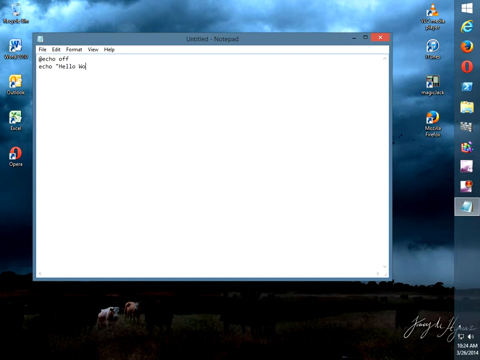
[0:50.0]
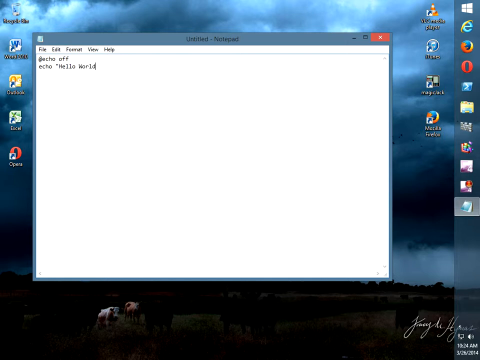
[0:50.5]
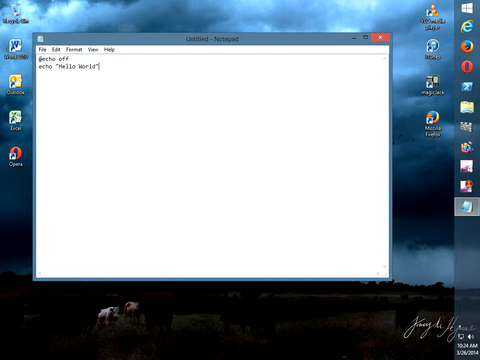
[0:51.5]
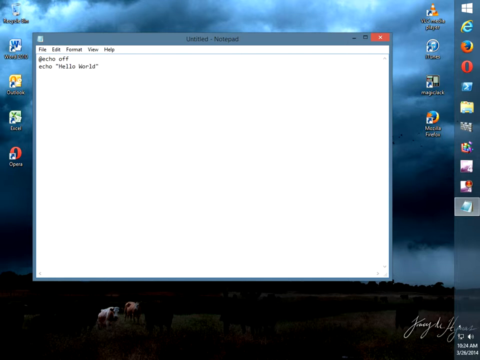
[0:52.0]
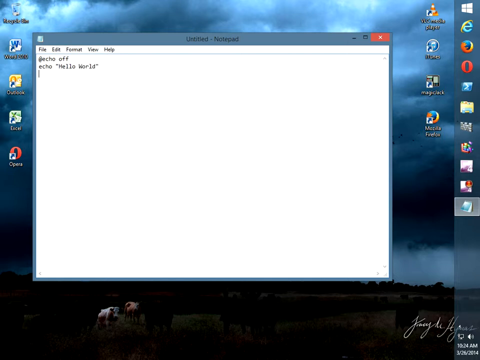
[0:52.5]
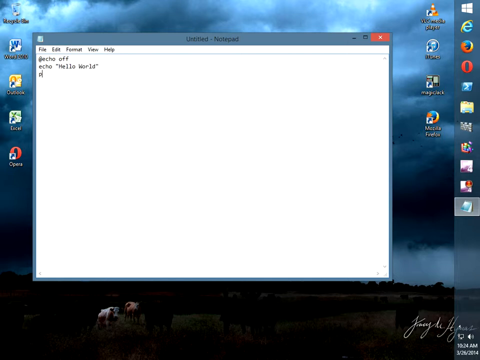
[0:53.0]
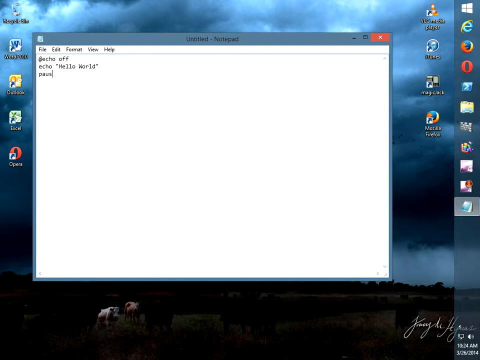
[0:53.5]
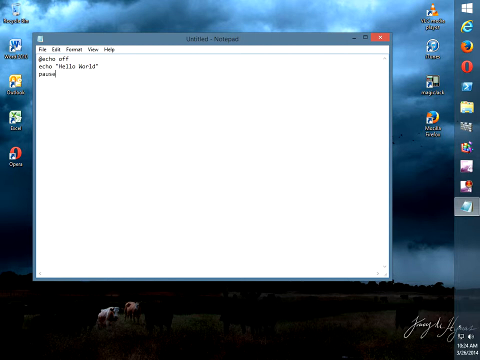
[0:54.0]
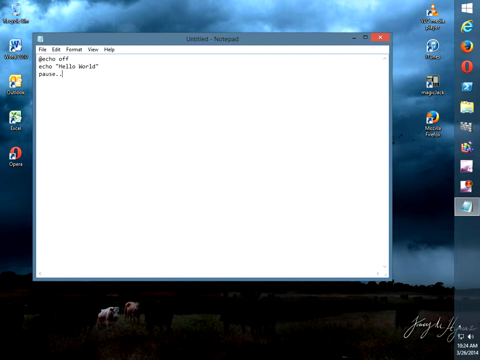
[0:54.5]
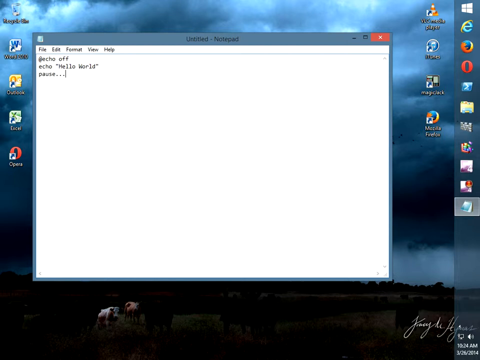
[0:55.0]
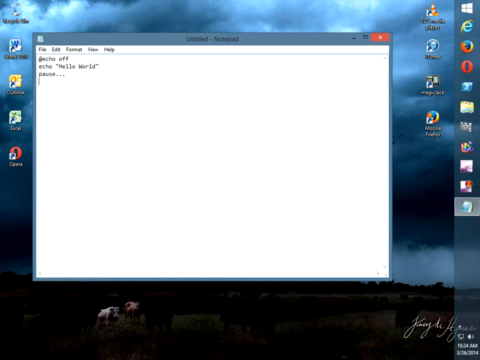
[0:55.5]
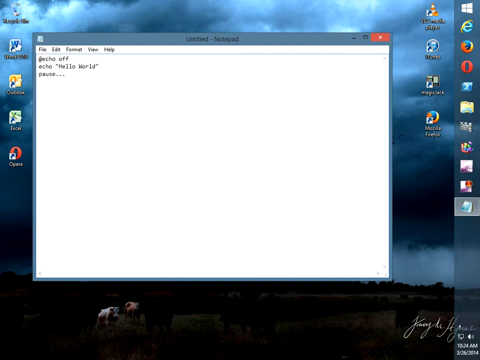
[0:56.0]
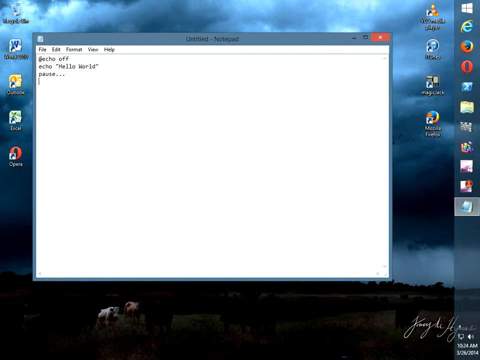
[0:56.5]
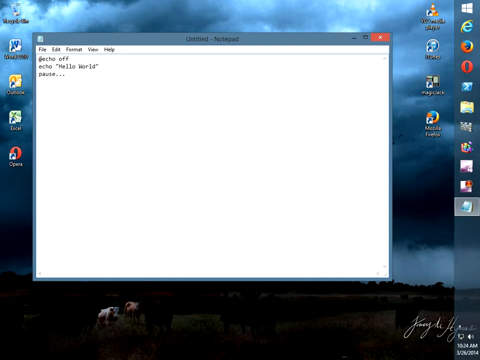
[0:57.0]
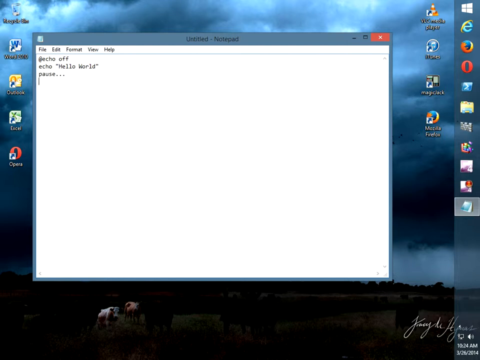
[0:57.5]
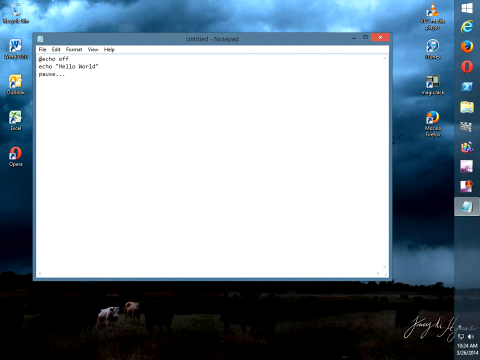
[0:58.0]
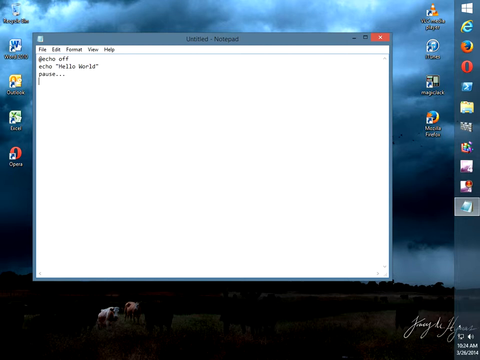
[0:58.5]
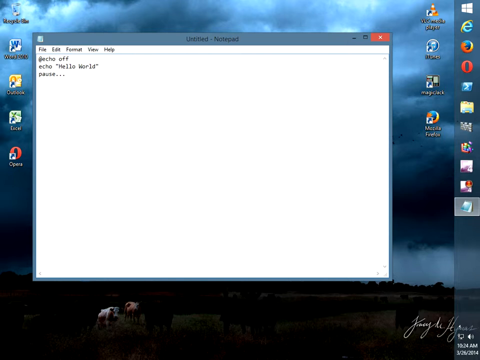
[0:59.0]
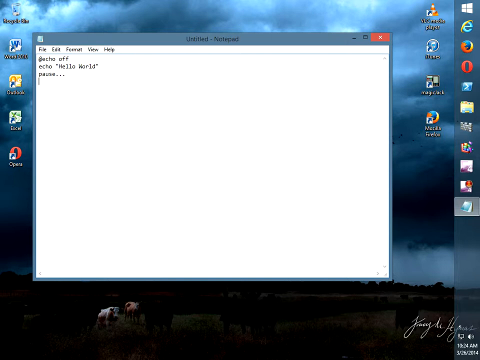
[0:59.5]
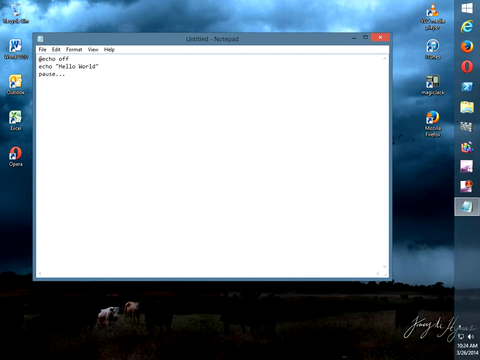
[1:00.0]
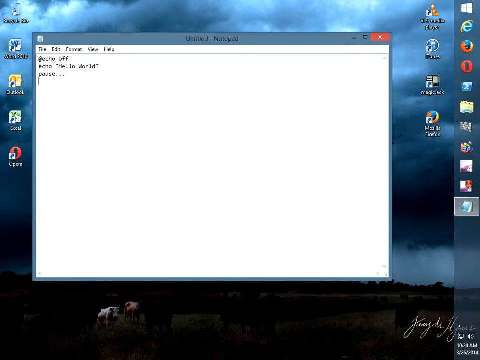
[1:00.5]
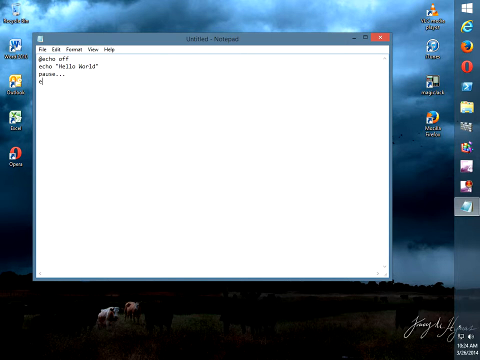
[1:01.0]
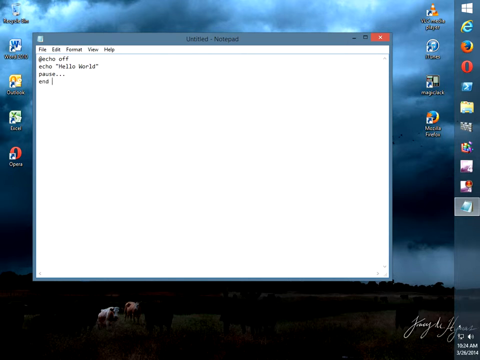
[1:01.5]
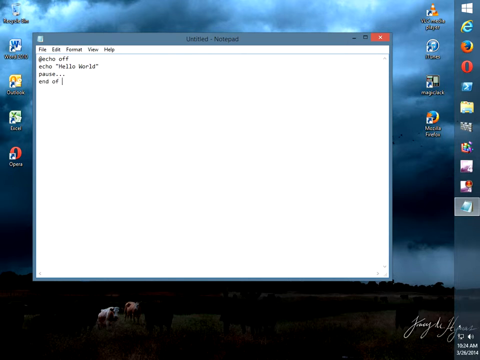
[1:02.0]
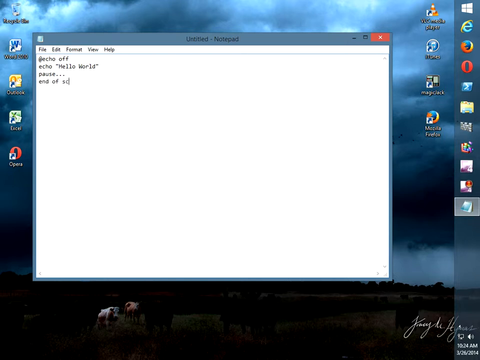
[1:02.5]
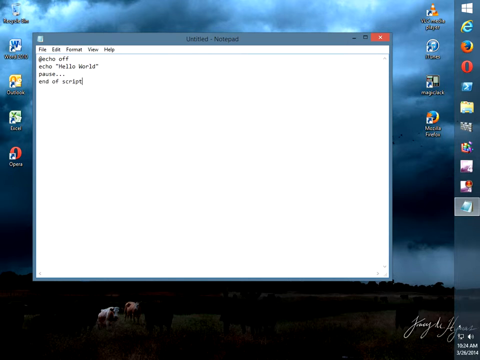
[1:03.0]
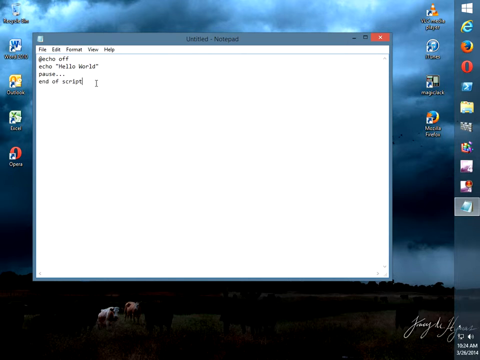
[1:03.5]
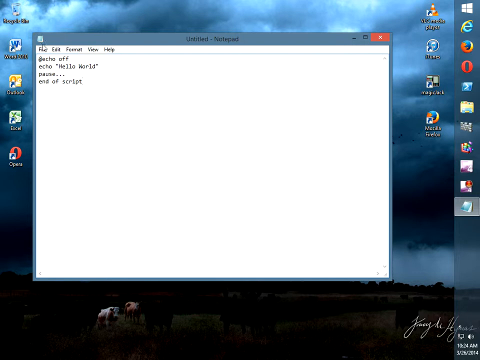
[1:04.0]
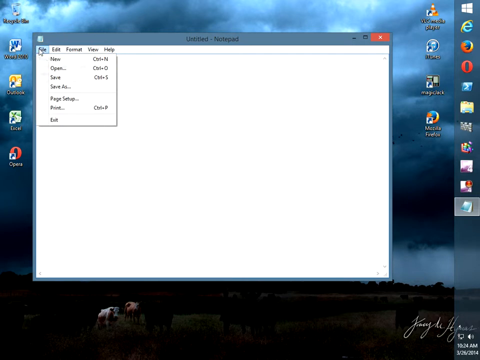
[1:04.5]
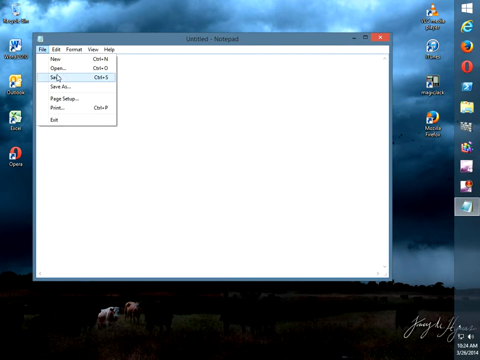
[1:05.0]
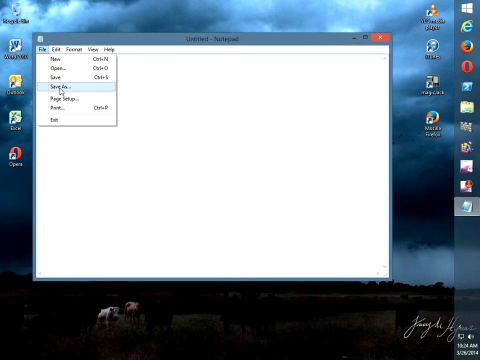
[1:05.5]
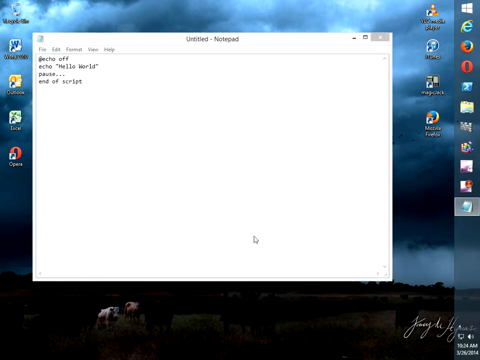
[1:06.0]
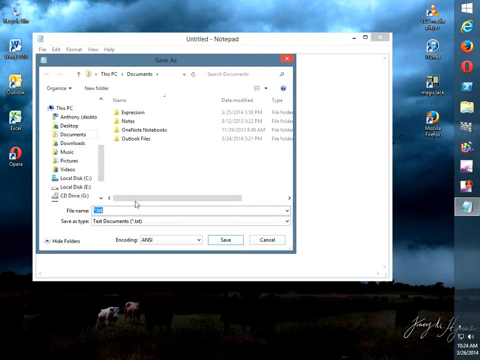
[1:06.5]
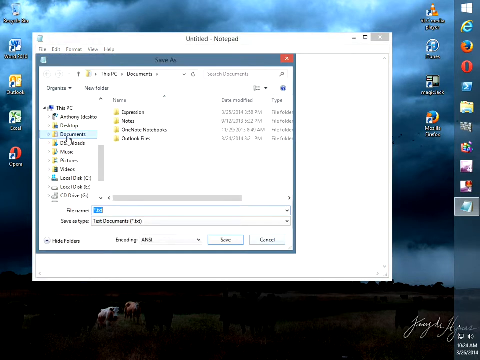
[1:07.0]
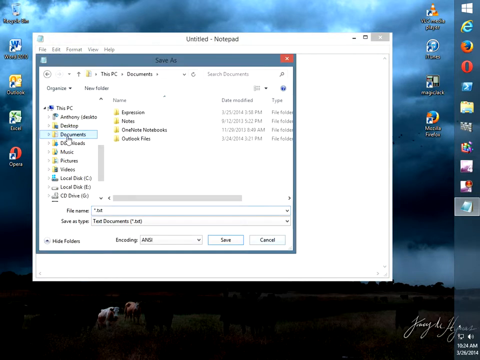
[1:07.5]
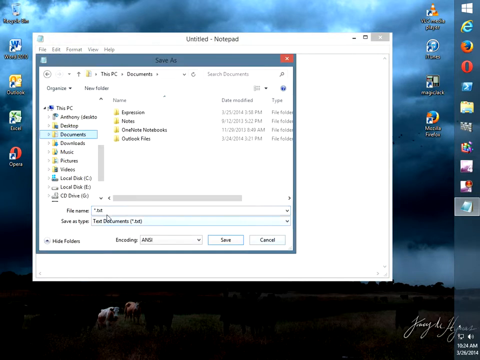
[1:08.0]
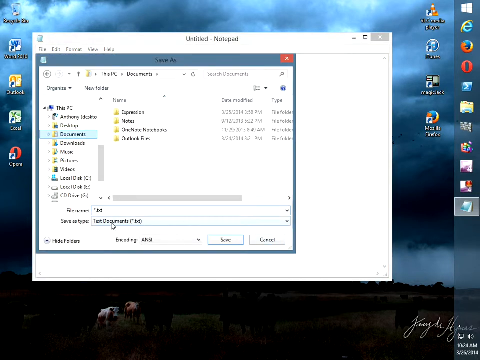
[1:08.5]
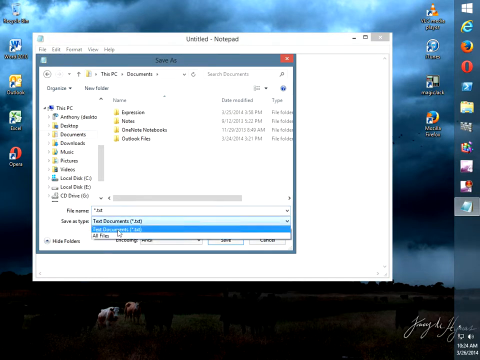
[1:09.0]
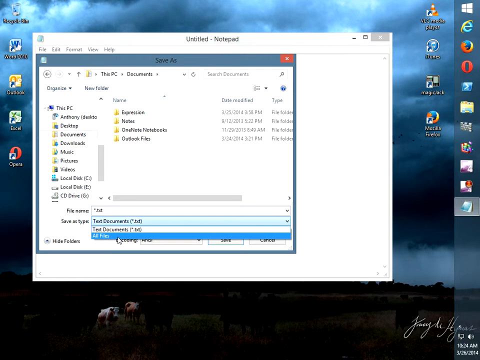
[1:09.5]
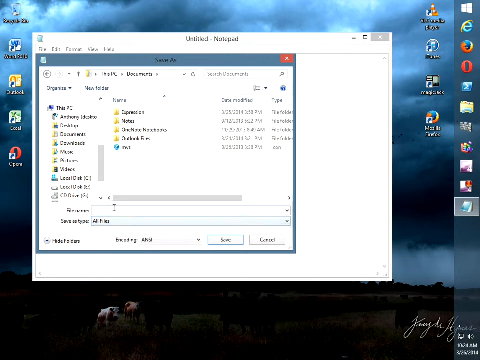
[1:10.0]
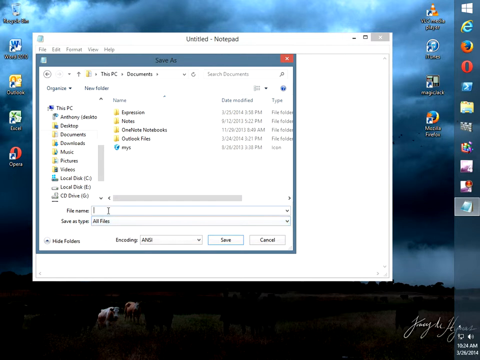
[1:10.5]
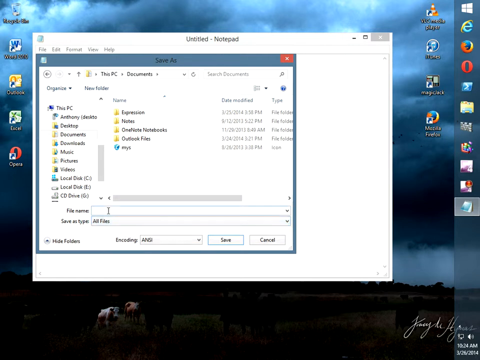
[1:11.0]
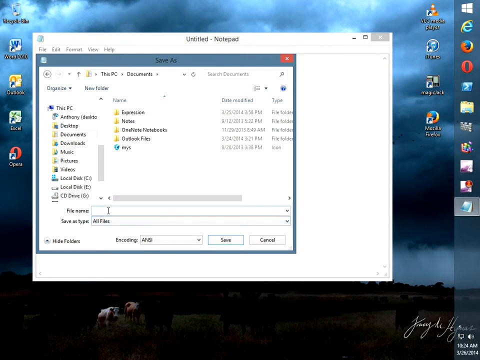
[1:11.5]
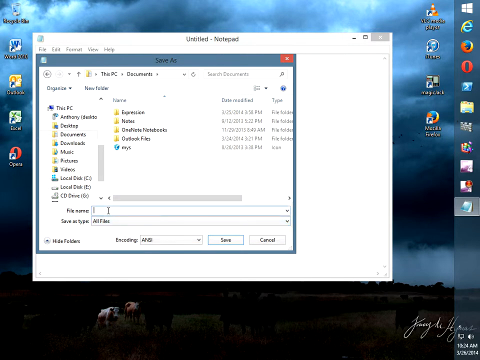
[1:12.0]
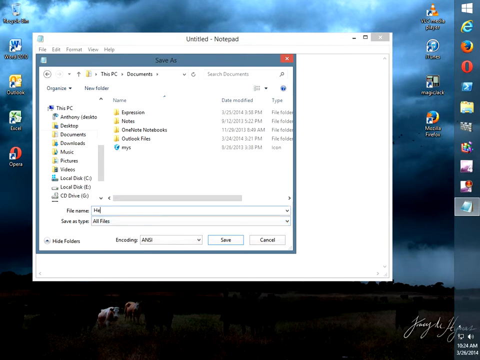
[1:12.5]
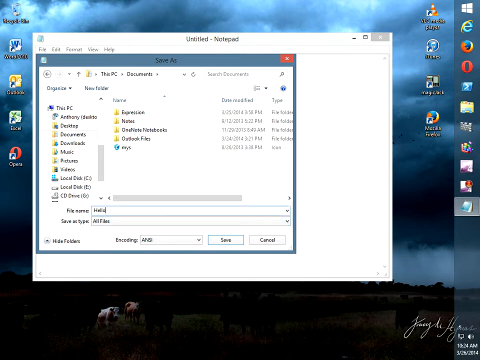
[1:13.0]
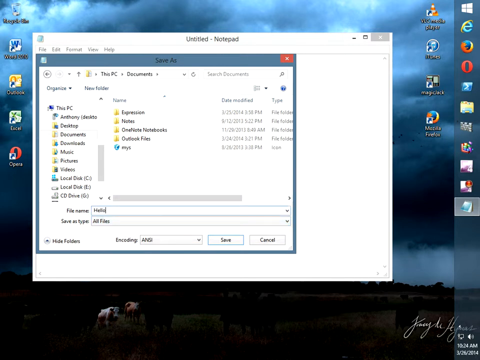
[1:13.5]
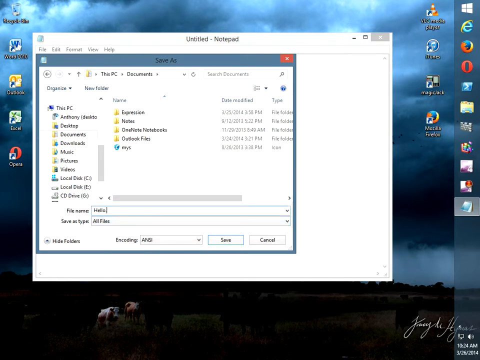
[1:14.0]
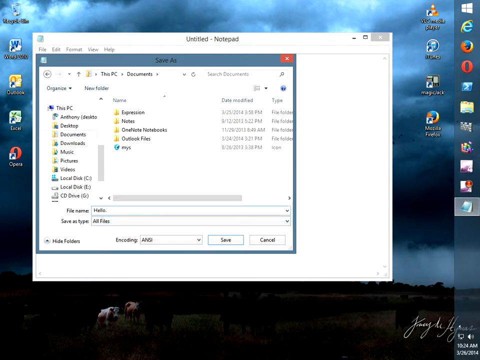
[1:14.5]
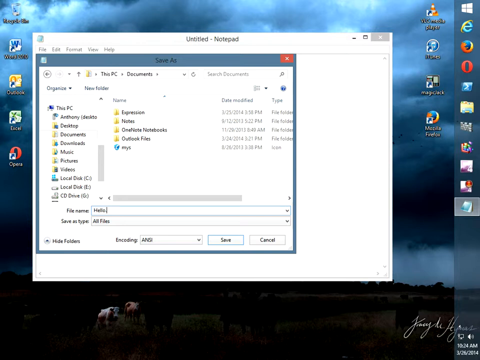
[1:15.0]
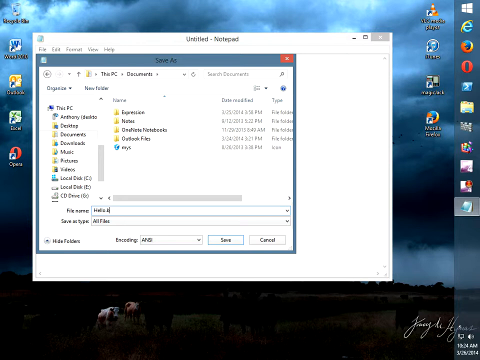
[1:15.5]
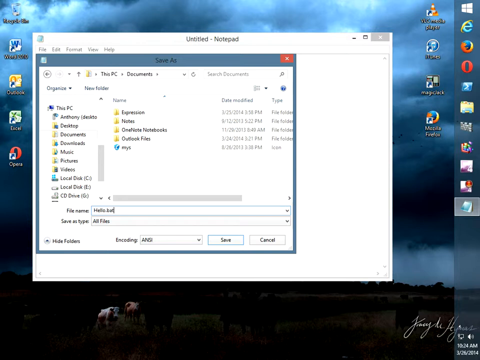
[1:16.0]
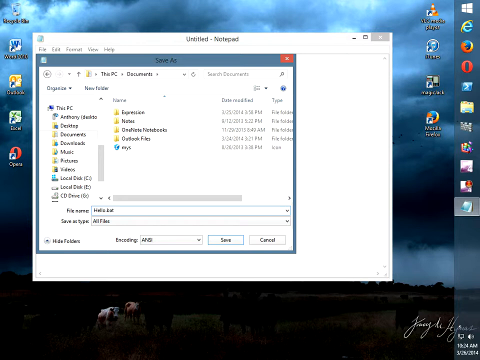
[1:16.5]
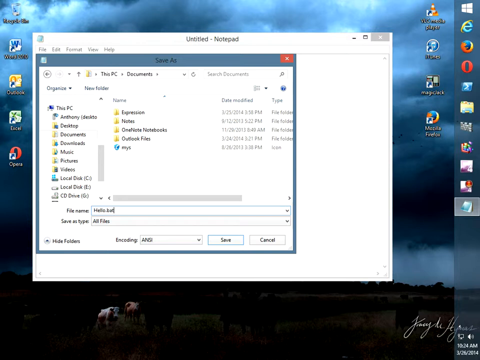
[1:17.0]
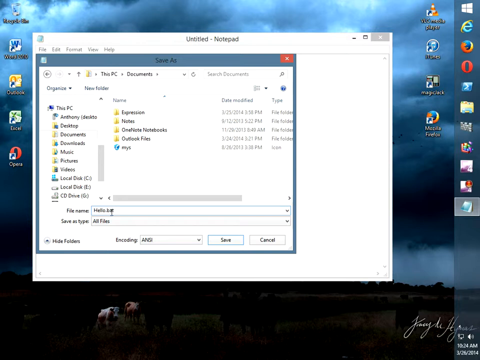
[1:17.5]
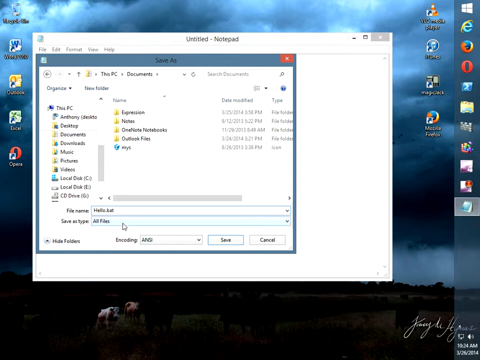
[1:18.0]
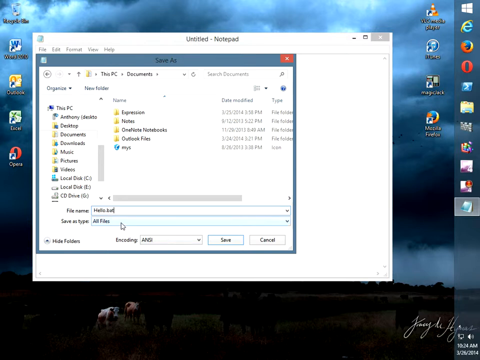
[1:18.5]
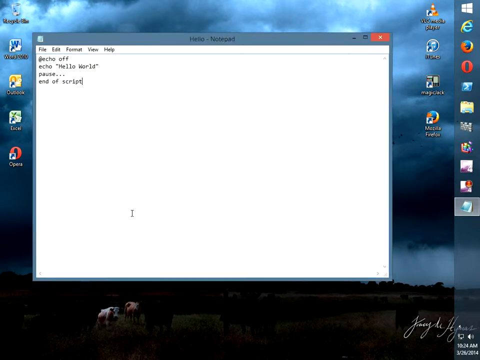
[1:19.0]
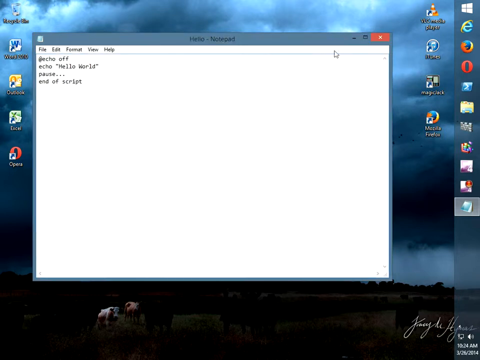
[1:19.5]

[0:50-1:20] In the open Notepad window, the first line reads "@echo off" and the second line reads "echo", an open quote, "Hello" with a capital H, and "Wo" with a capital W. The word "World" is finished, an end quote is added, and then periods or dots are typed. On the next line "end of script" is written. The user goes to File and clicks Save, the Save As window opens, Documents is clicked, and then All Files is selected. The screen holds there, with something that cannot be fully read due to the screen resolution.